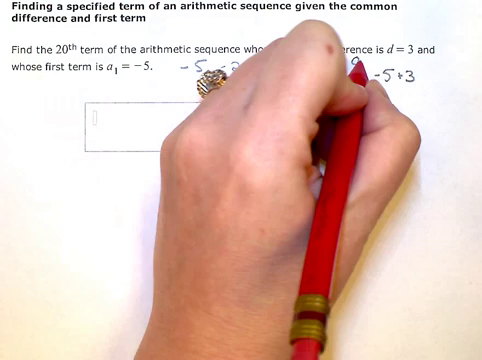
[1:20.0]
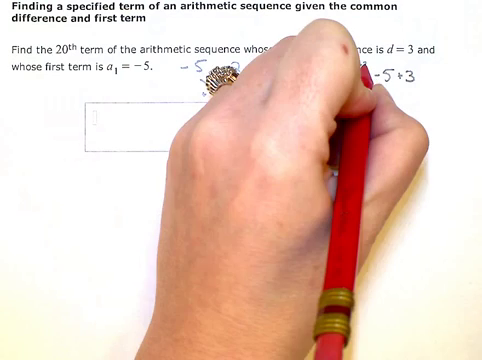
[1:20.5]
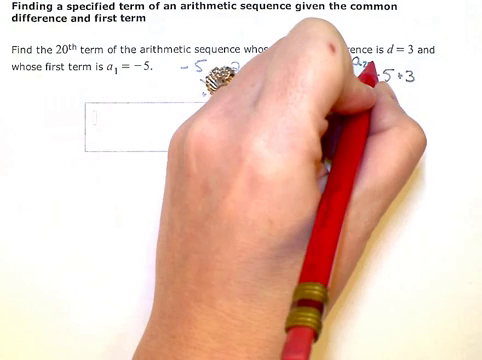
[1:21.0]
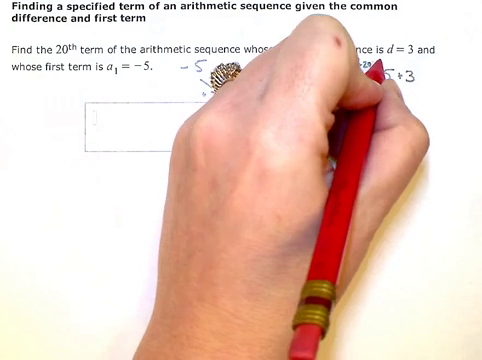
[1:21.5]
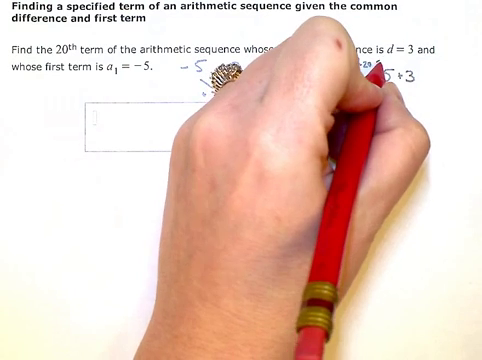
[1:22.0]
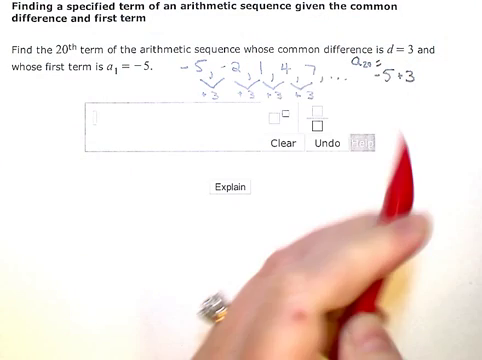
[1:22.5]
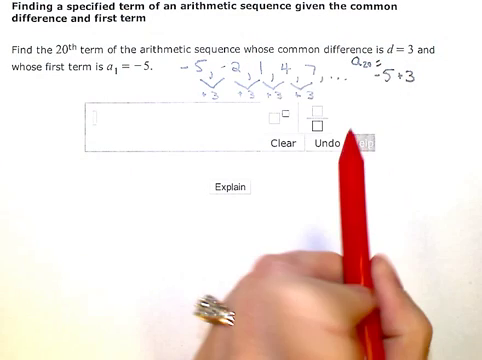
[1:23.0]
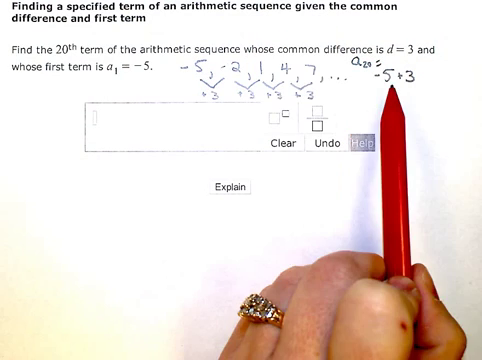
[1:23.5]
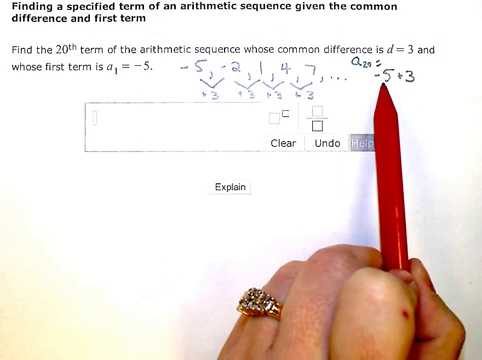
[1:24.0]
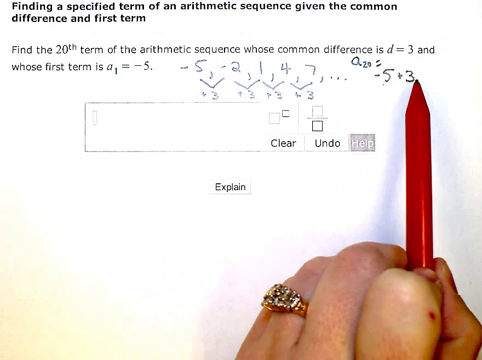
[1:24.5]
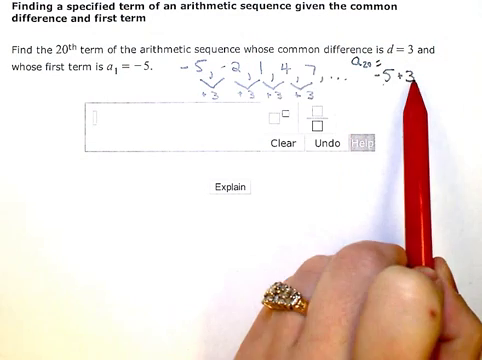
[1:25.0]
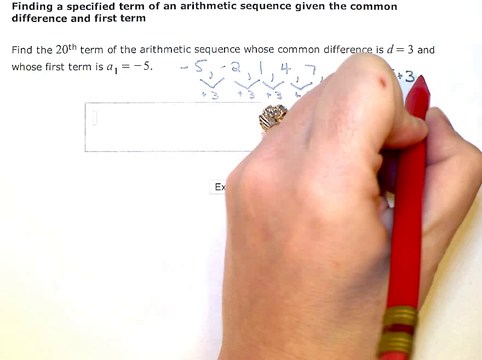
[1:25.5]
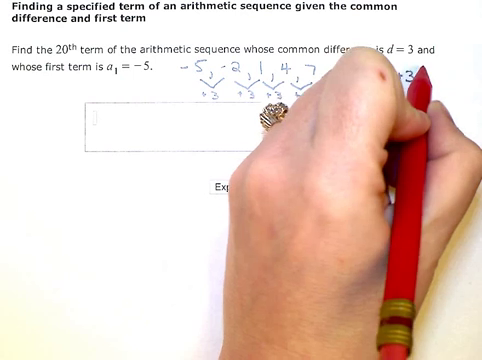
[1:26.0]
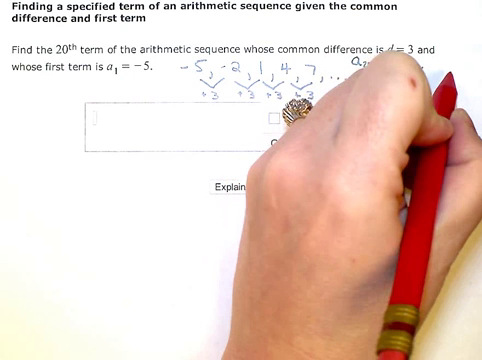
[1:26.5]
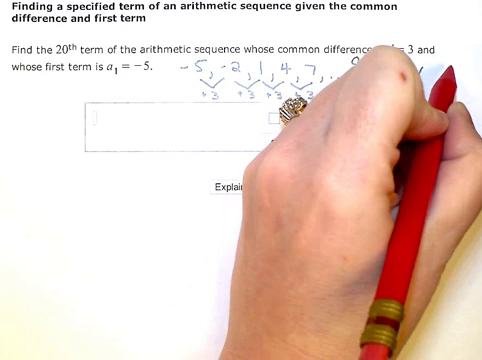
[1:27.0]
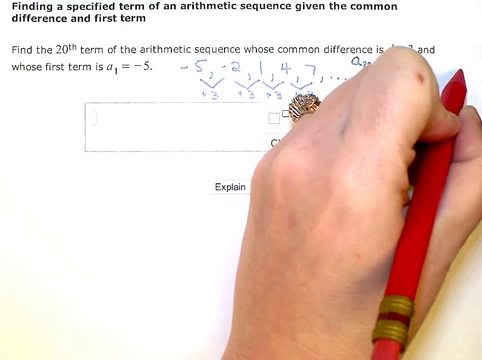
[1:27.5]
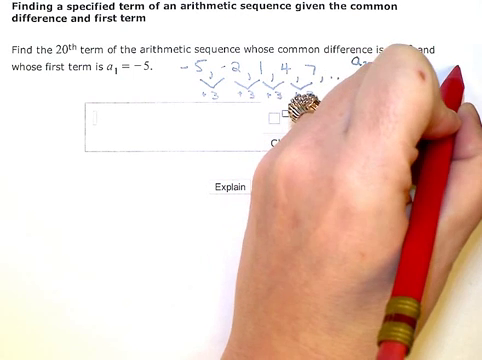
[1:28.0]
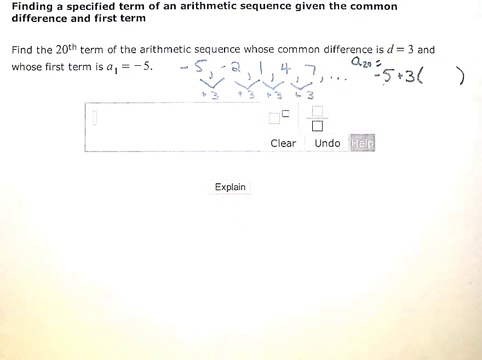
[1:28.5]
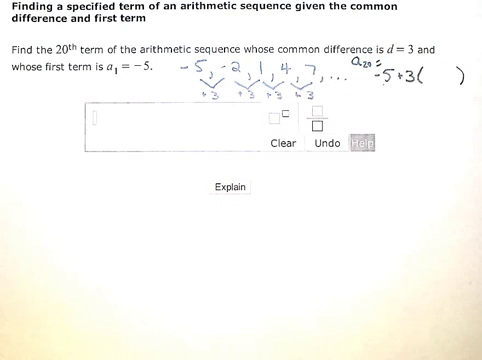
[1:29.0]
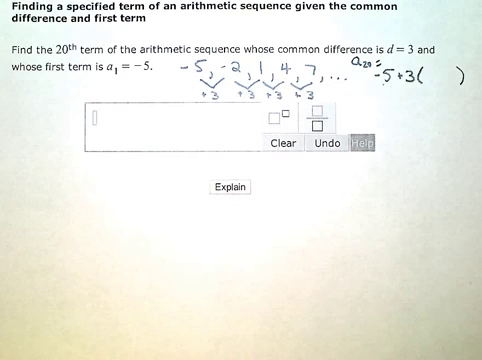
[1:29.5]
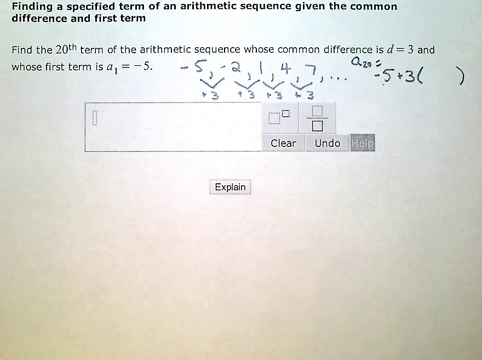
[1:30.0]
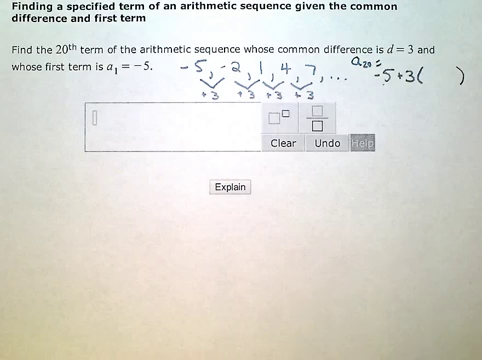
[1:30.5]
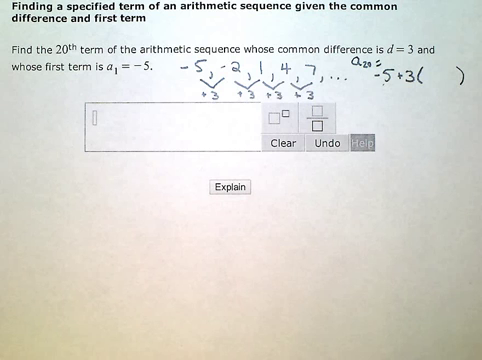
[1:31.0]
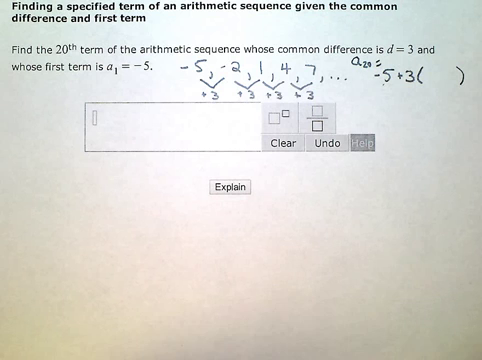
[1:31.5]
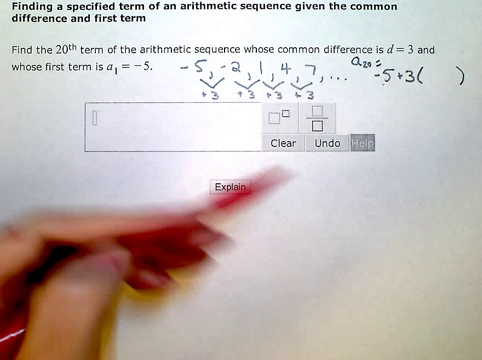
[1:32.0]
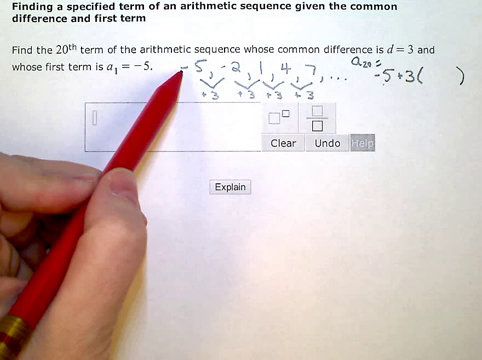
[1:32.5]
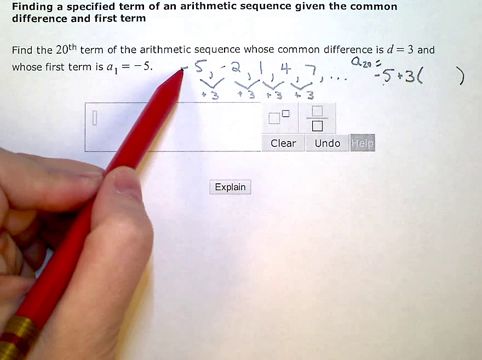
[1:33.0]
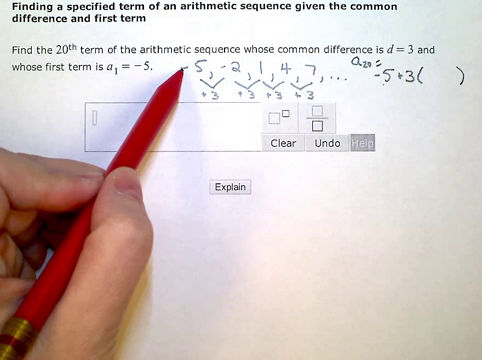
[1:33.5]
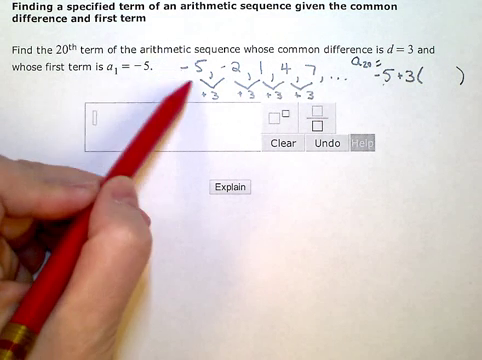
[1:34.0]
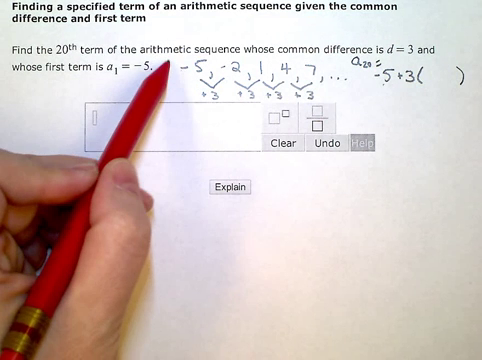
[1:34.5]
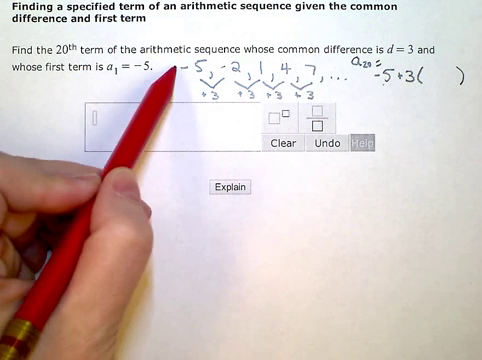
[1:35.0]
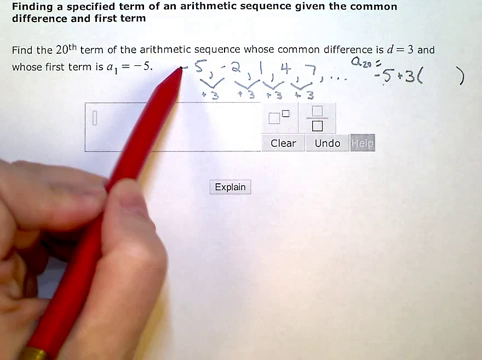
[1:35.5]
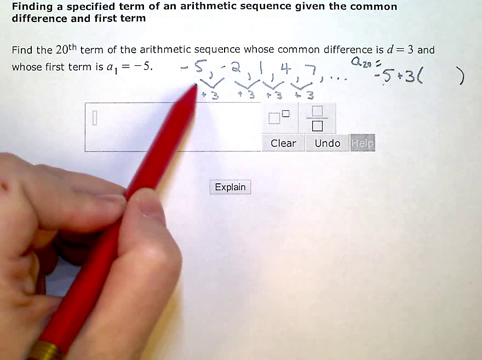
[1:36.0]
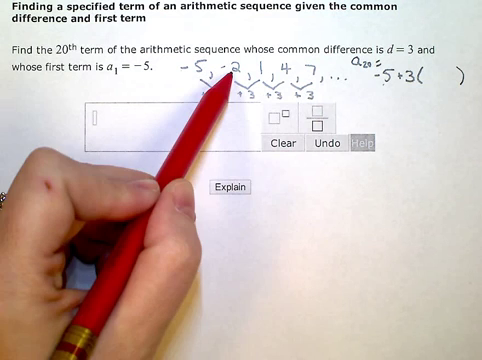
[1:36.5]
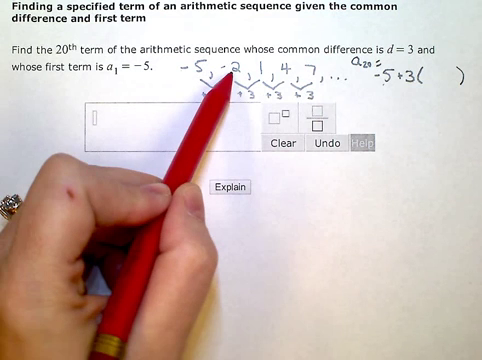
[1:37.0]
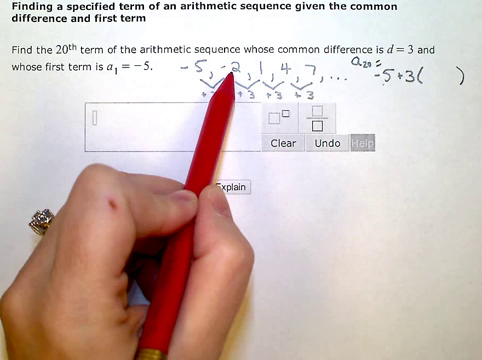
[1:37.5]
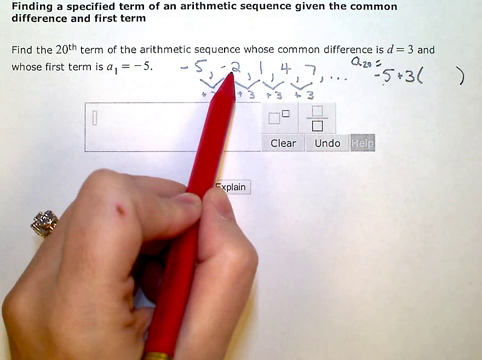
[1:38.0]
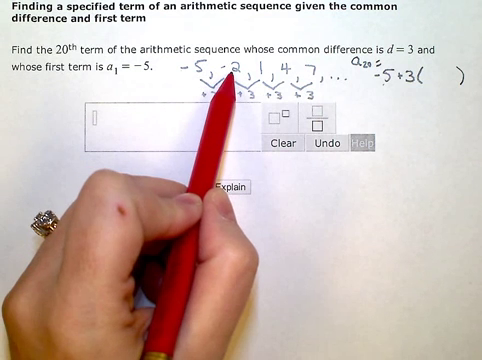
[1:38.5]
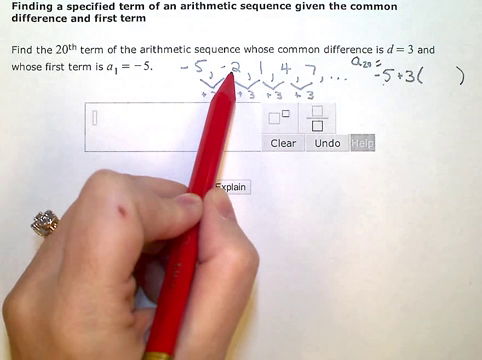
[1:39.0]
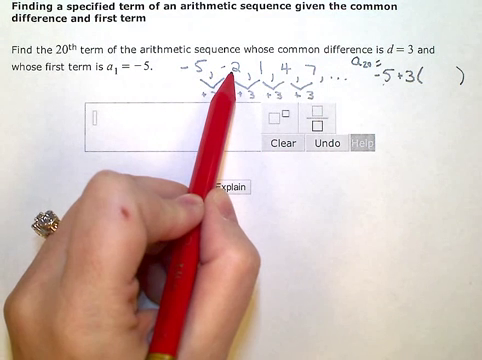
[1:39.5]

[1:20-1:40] The heading and the question about the twentieth term with d = 3 and a1 = -5 are on screen. The problem solver has written -5, -2, 1, 4, 7, ..., then -5 + 3, and +3 below the numbers on the left. "a20 =" is also written in. She points at the 5 and the 3, writes parentheses, and then points at the 5 and the -2.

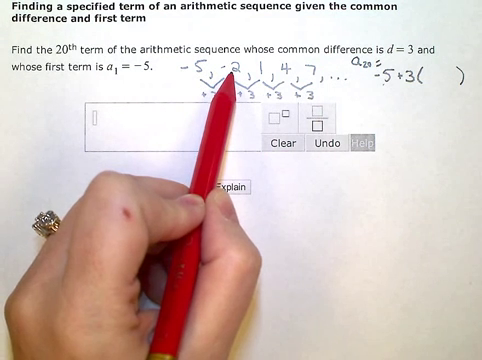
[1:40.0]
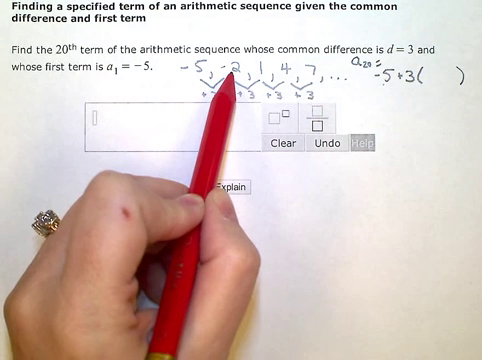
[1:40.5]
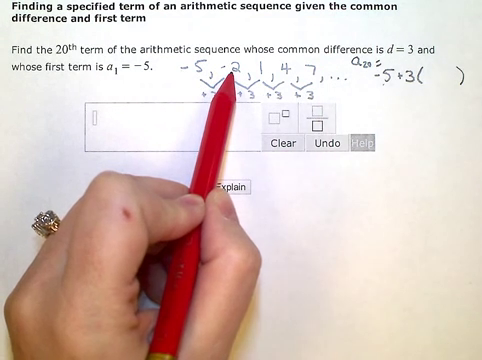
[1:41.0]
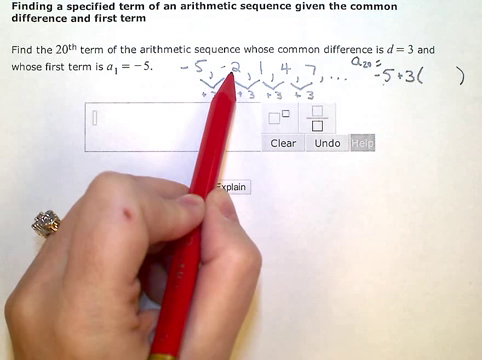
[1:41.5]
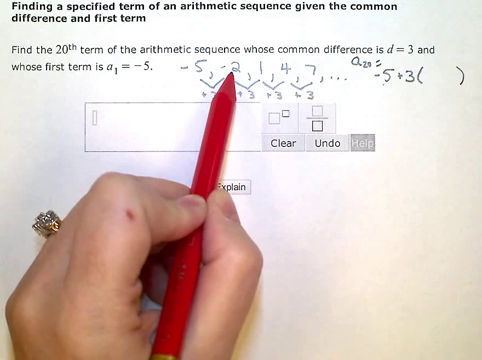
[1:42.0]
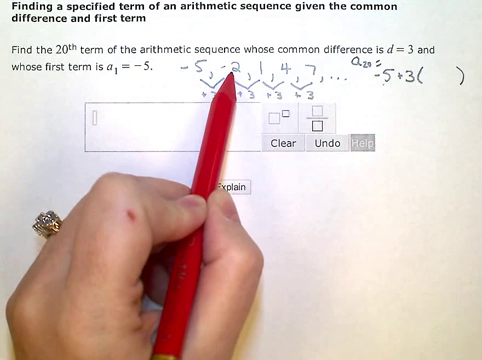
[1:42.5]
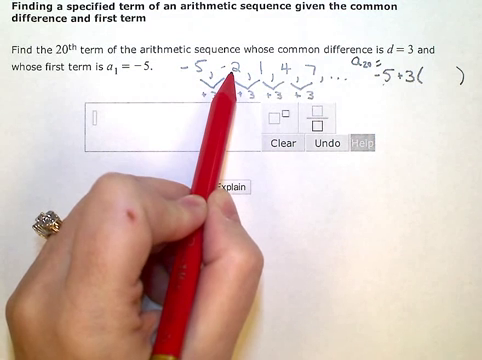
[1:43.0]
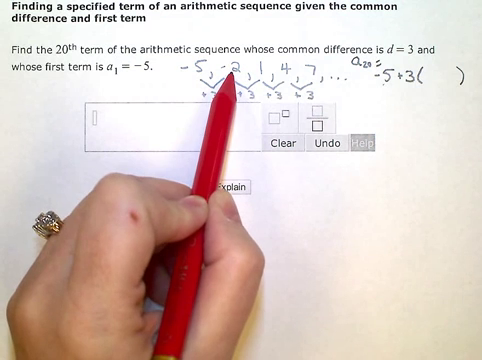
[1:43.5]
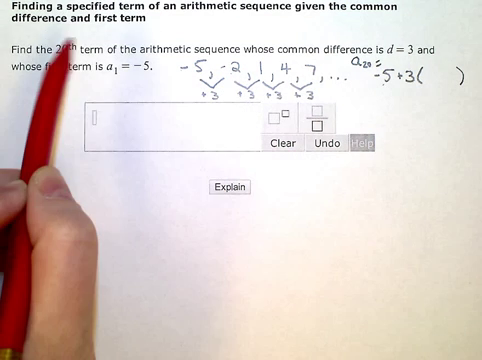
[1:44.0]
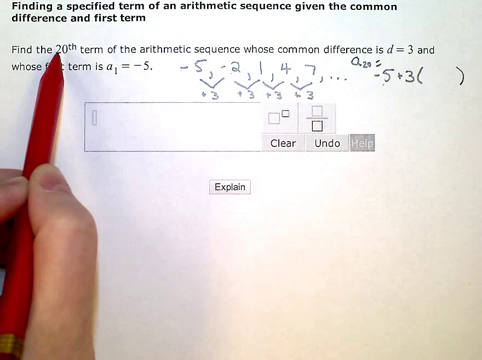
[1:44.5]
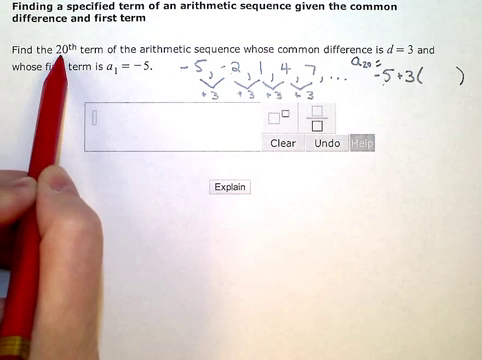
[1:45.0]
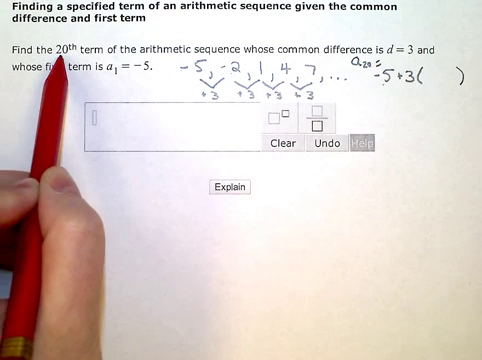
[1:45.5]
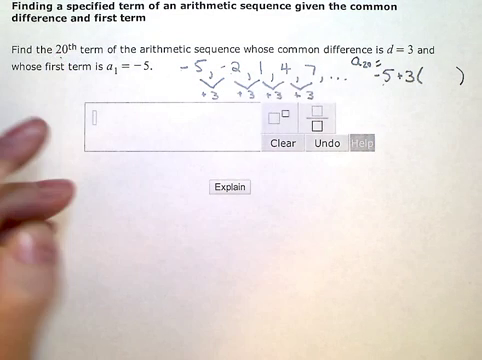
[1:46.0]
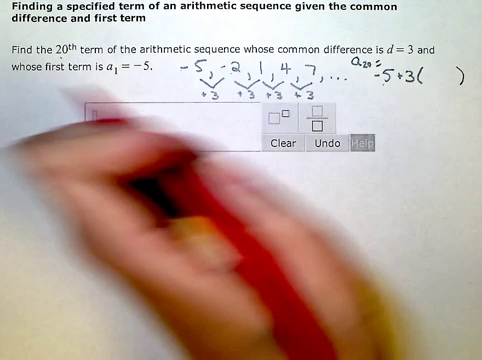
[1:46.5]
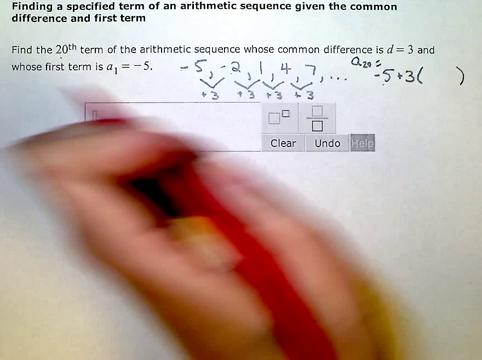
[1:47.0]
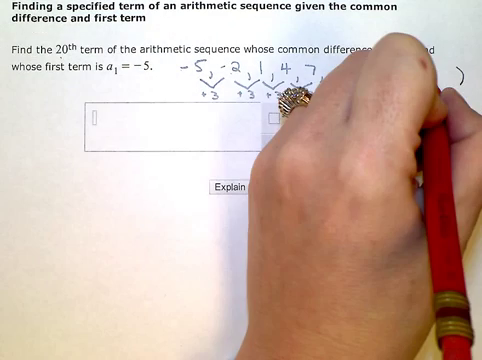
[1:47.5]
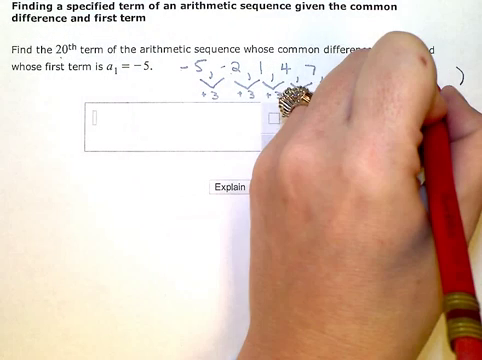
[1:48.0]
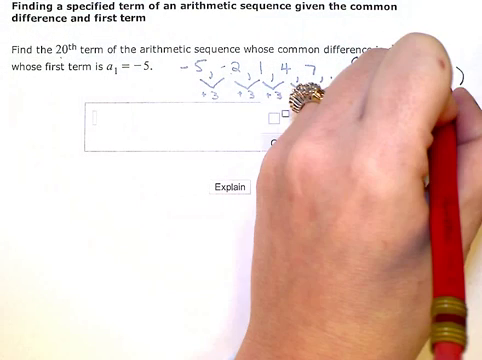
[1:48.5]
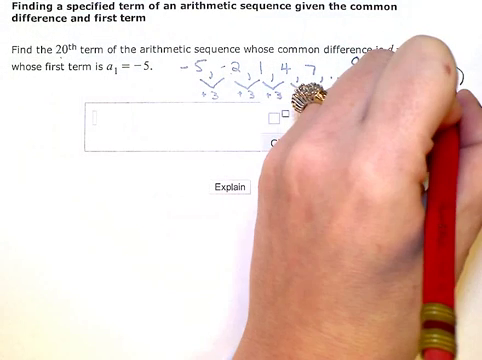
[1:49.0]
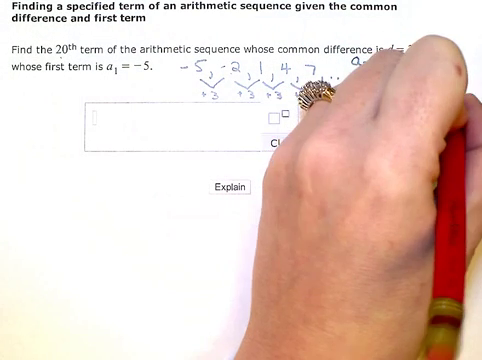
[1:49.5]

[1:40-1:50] With the heading and the 20th-term question on screen, the page shows -5, -2, 1, 4, 7, ..., then -5 + 3 followed by parentheses, and "a20 =". The problem solver points at "find the 20th term", goes back to the parentheses, and fills in n - 1.